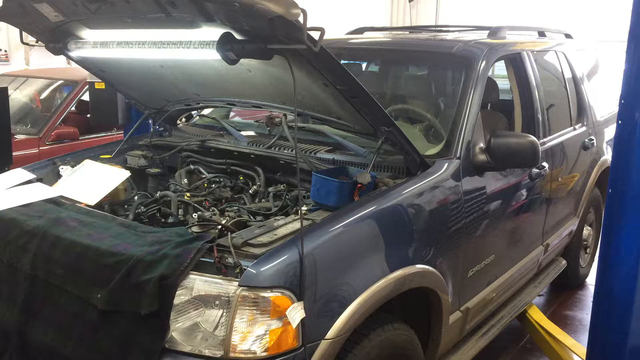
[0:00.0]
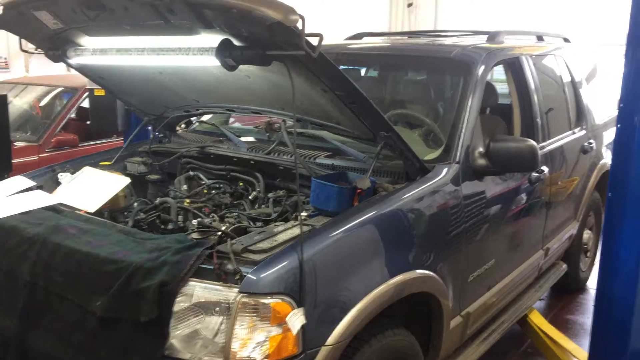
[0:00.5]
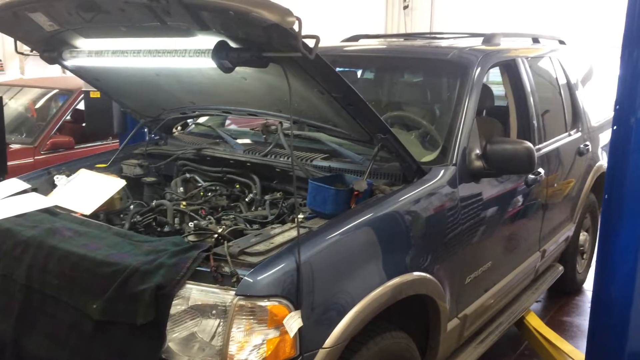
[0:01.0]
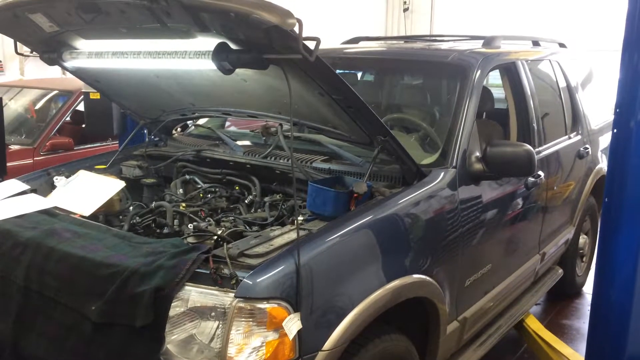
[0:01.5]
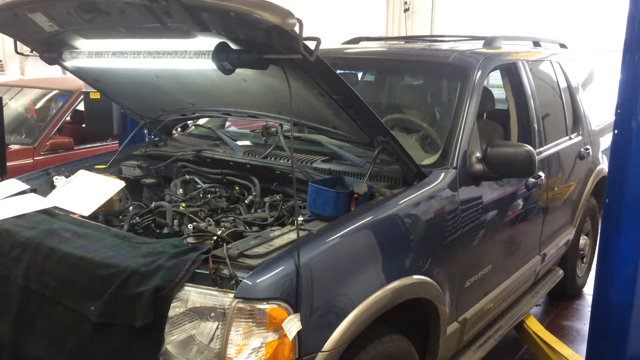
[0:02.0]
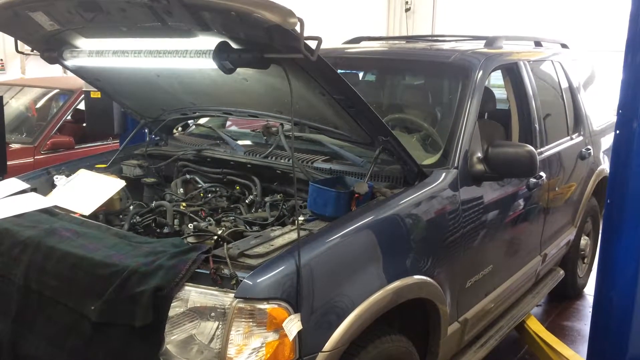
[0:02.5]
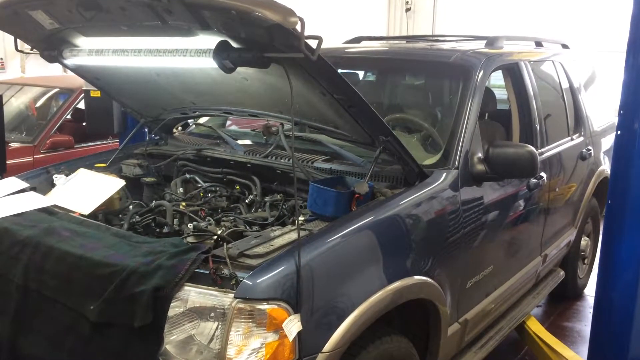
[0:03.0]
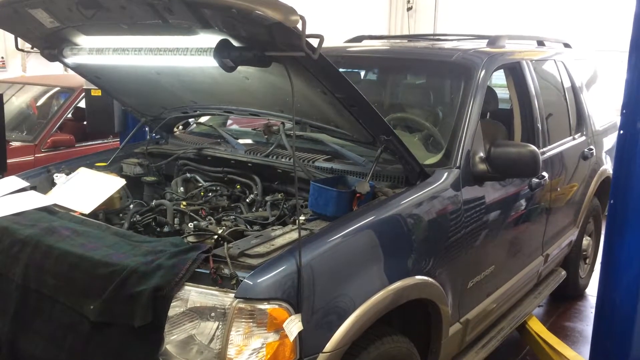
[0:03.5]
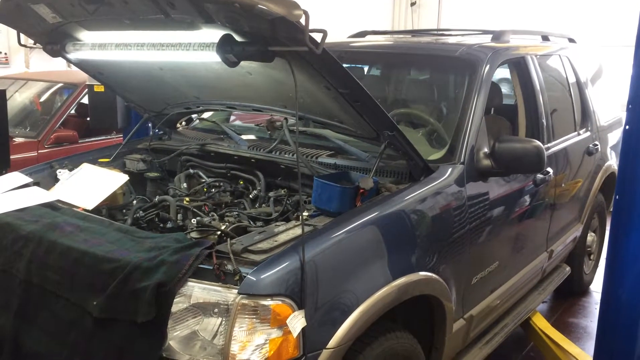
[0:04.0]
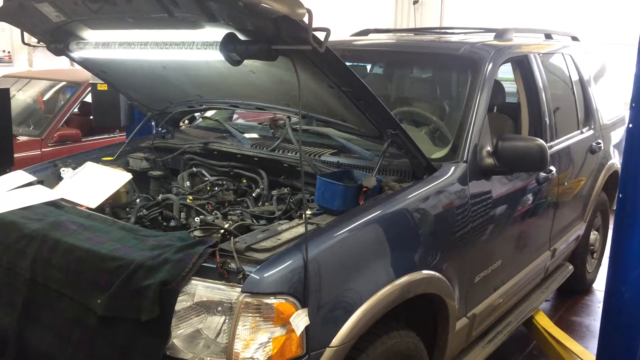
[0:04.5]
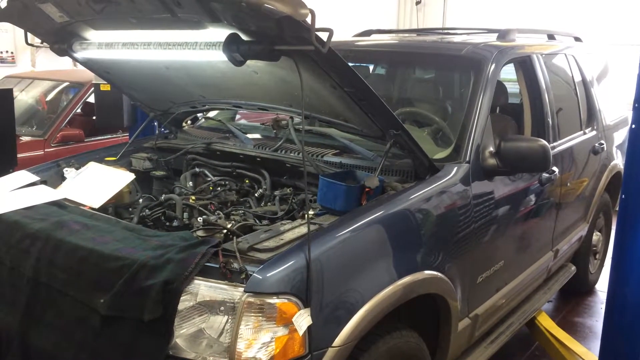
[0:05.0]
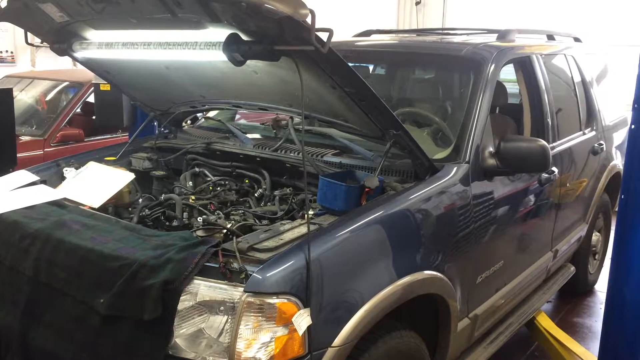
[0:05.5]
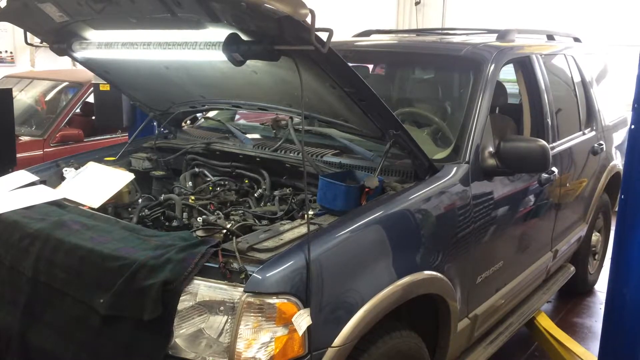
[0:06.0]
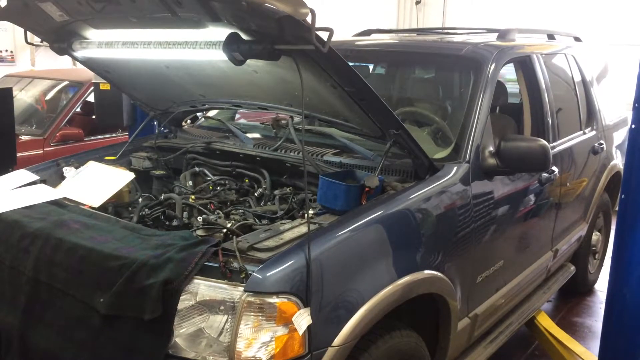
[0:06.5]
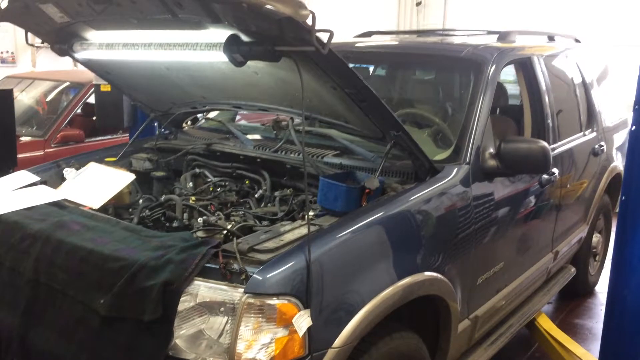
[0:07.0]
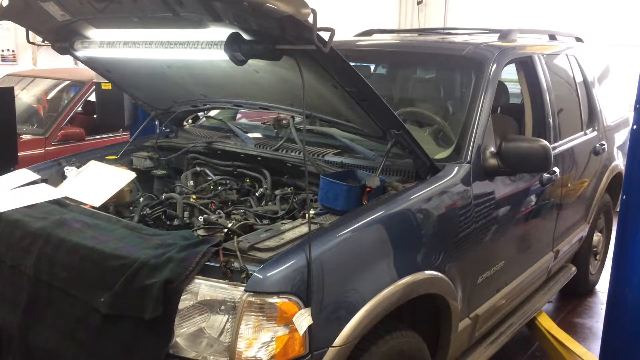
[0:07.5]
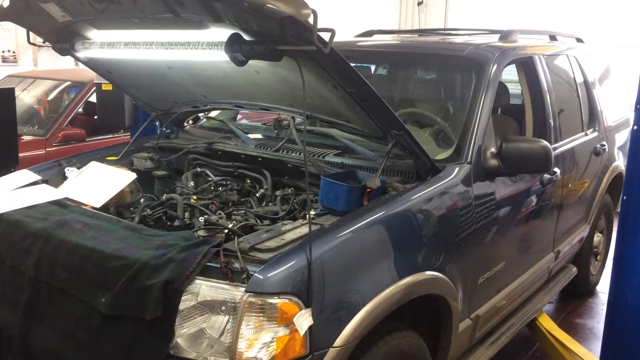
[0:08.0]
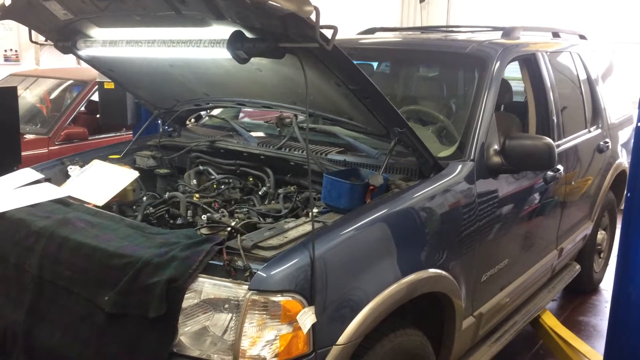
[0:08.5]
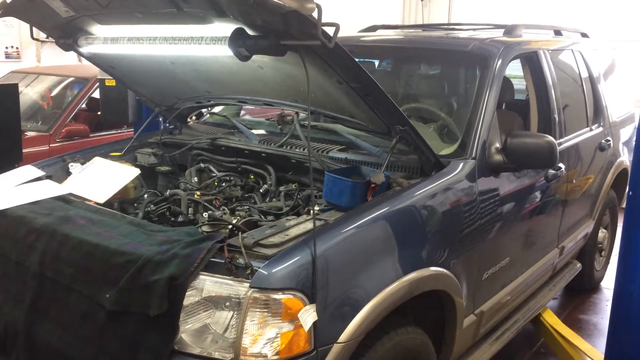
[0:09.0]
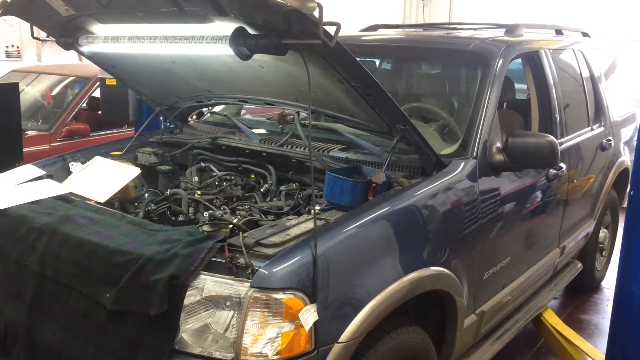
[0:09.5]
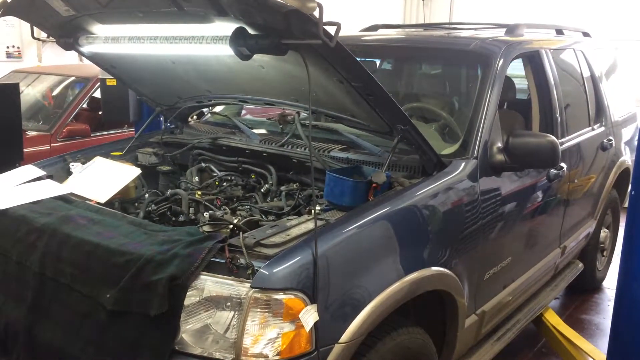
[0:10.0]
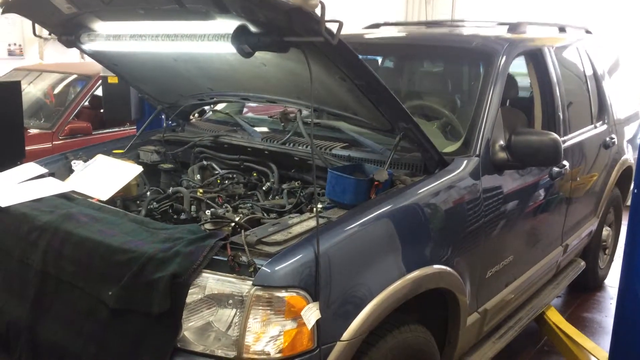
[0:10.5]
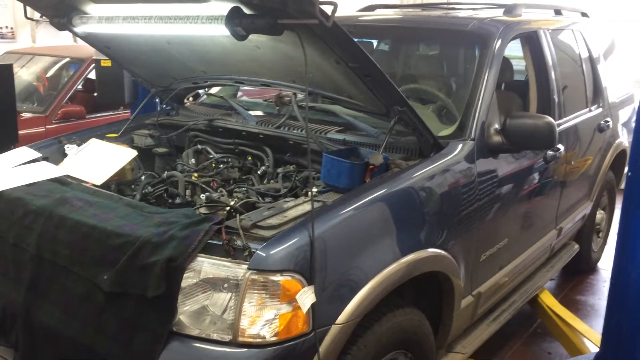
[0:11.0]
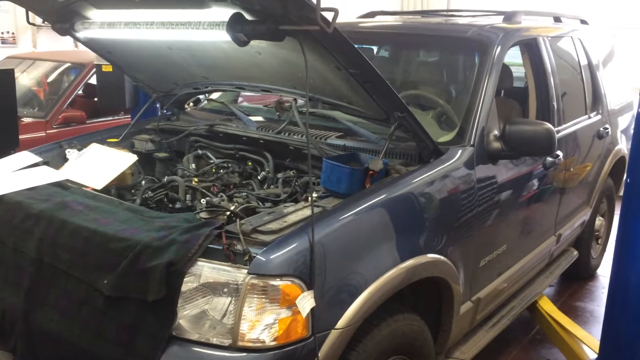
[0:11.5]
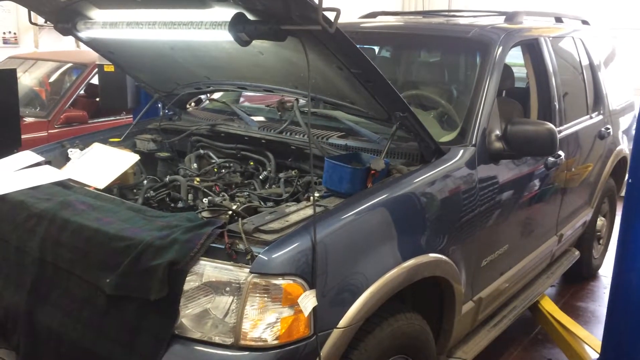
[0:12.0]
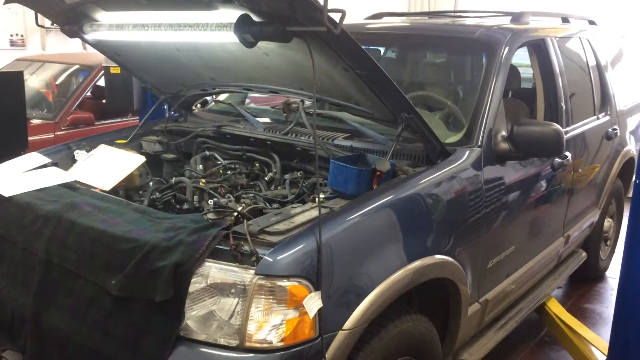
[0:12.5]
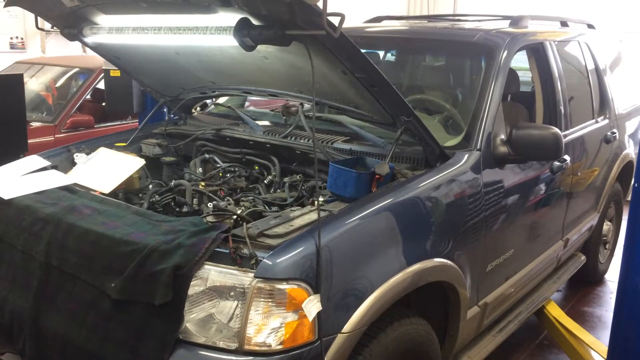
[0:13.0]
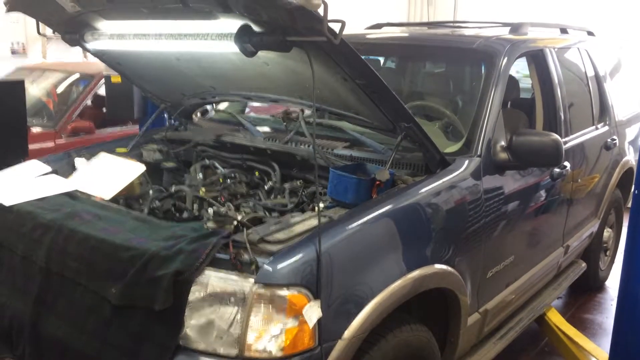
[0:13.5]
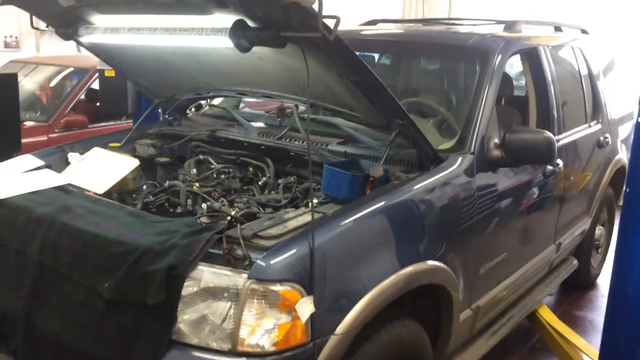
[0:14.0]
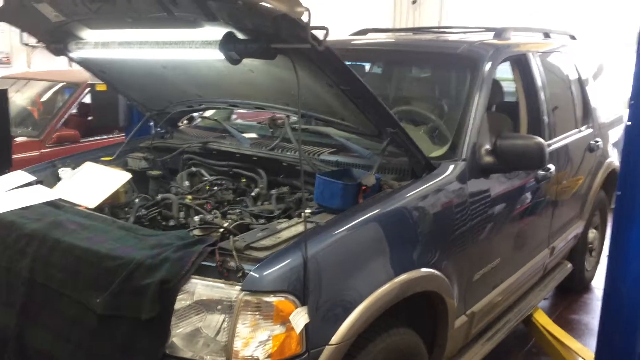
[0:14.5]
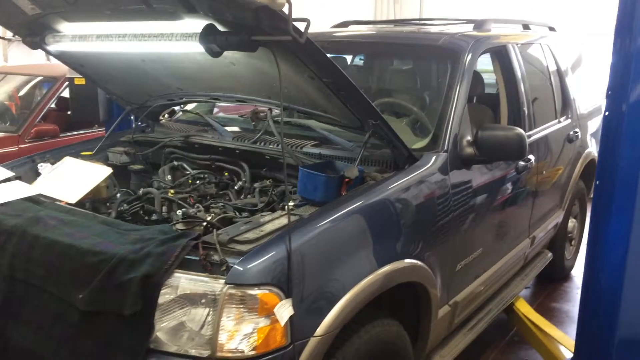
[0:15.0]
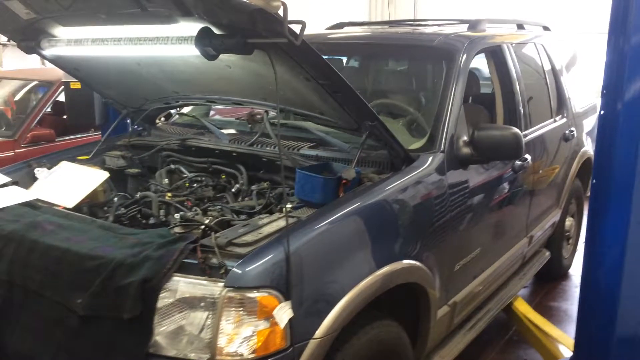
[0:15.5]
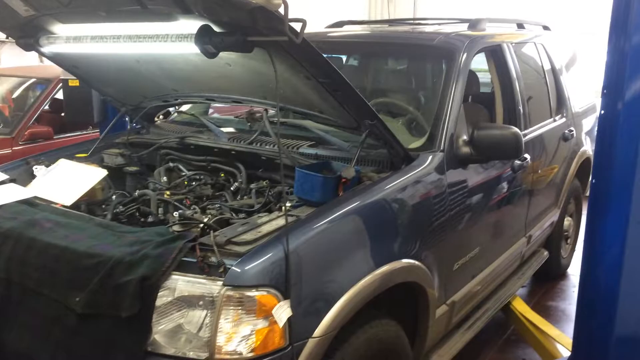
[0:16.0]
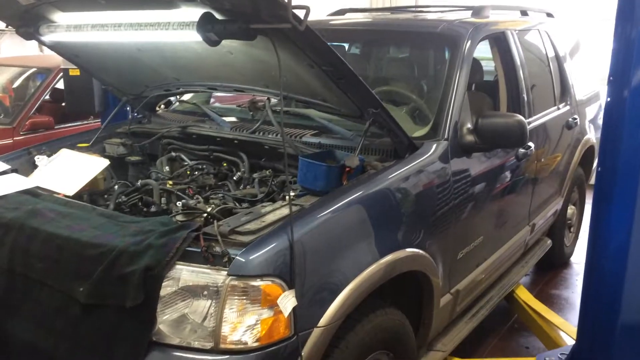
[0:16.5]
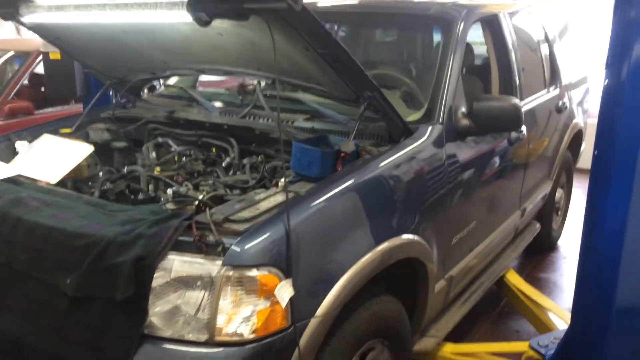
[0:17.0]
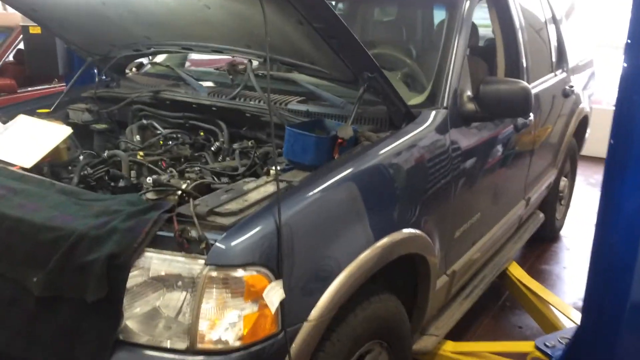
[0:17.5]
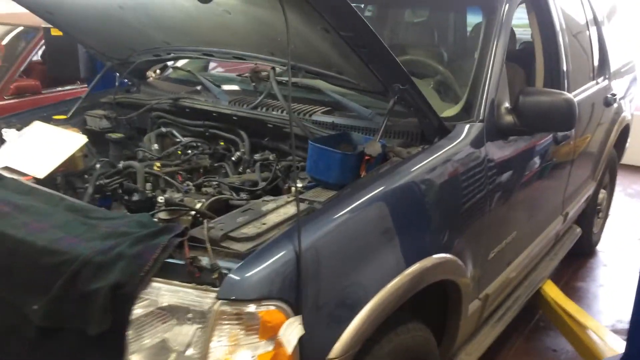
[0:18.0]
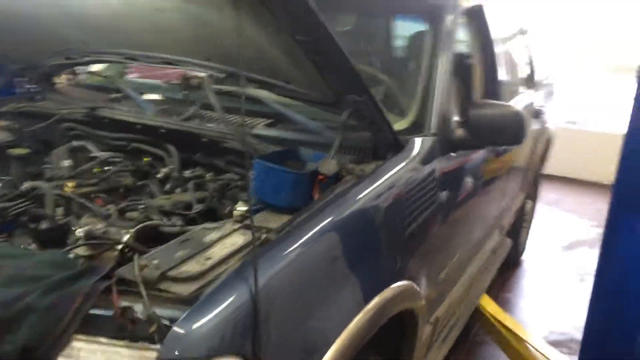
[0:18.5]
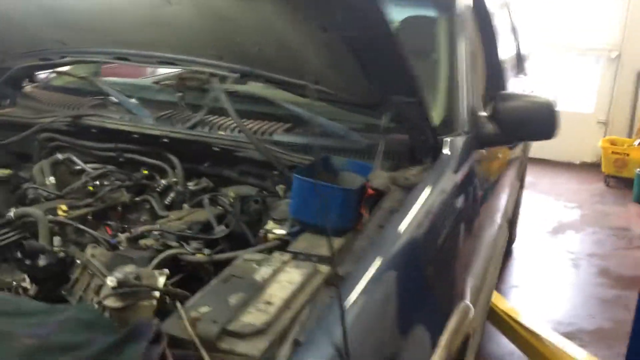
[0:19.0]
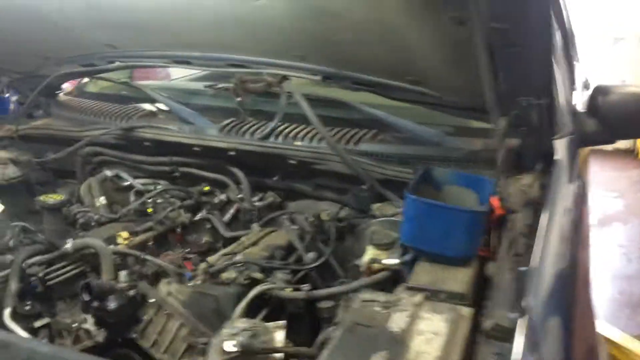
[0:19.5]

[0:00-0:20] An automobile appears to be in a workshop or mechanic shop, with its hood open to reveal the inner mechanics. The car in focus is dark blue and seems to be an older-model SUV. There is a jack at the bottom of the car and another car, a red one, behind it. A black cover covers the front of the car, and some lighting goes down into the open hood, highlighting the inside. The footage is a bit shaky. Various machine wires go through the engine area under the hood, and the headlights are visible. Because the car is angled, only its left side shows: two of the tires, one rear-view mirror, and the driver's side. At the end, the camera very slightly zooms in on the machinery inside the hood.